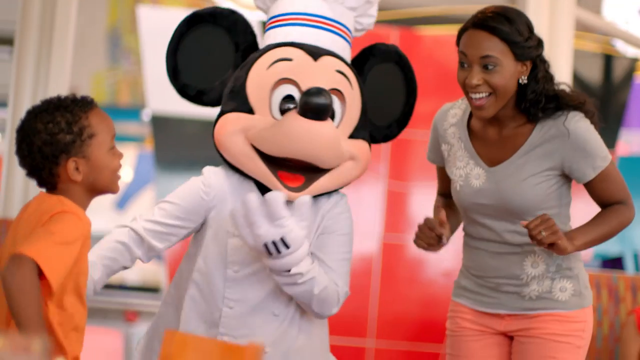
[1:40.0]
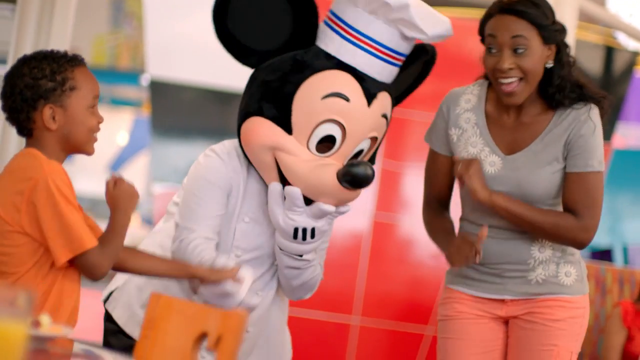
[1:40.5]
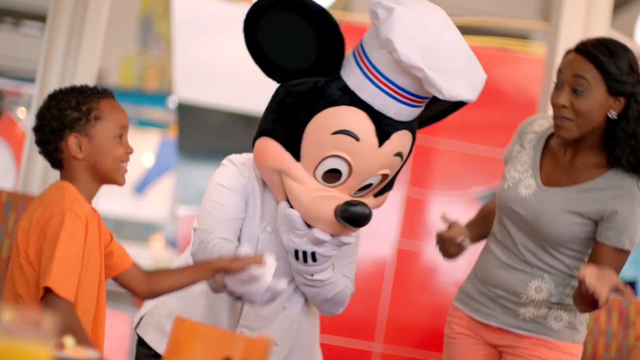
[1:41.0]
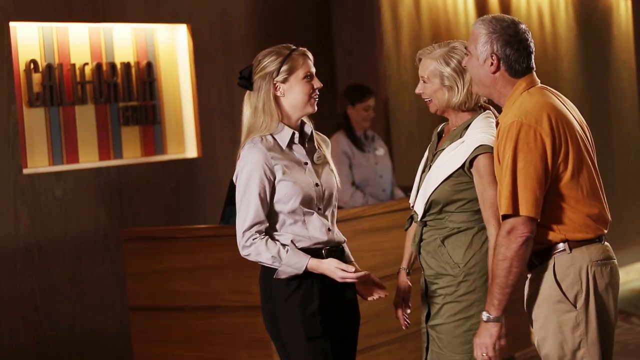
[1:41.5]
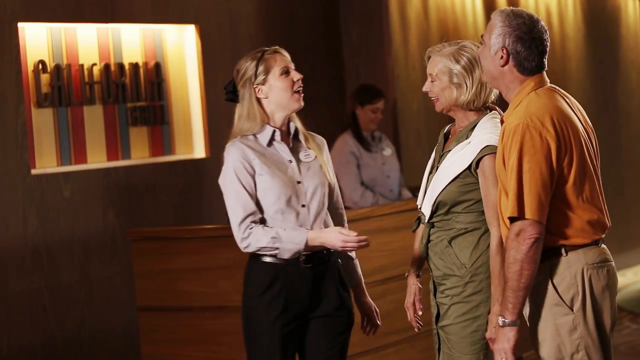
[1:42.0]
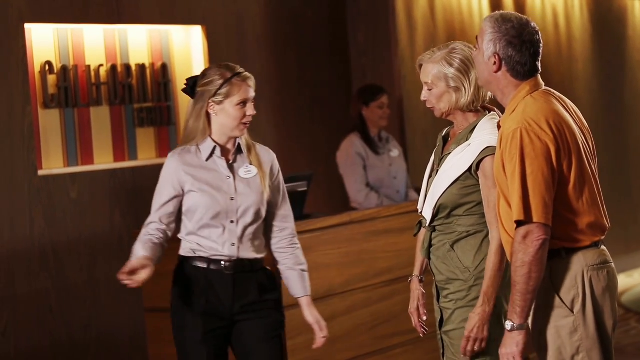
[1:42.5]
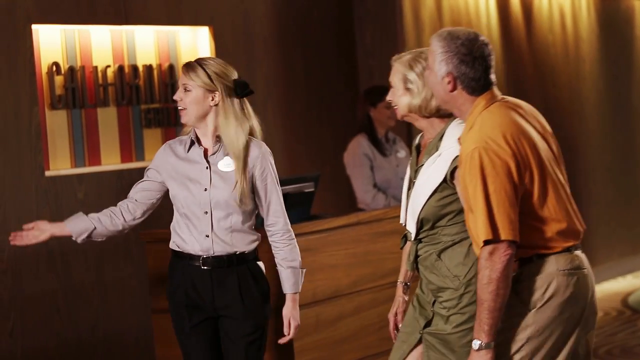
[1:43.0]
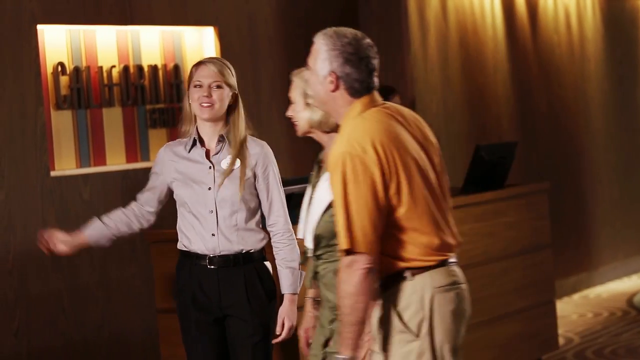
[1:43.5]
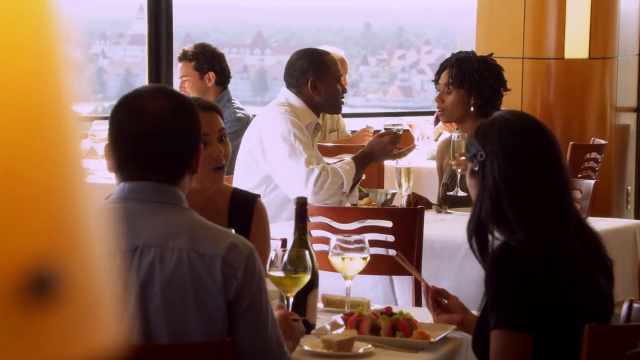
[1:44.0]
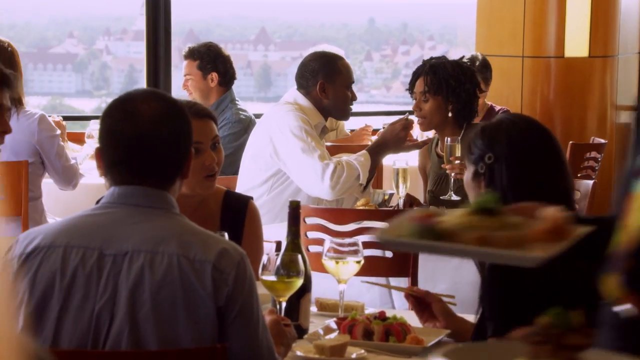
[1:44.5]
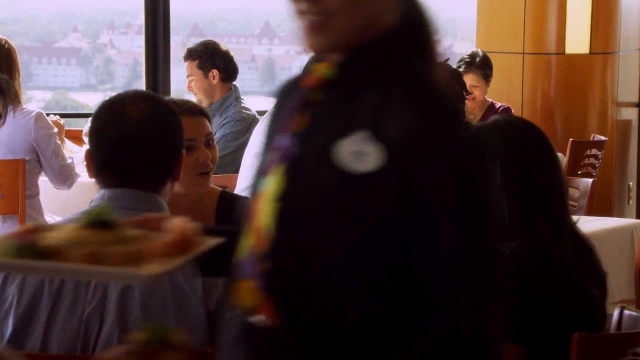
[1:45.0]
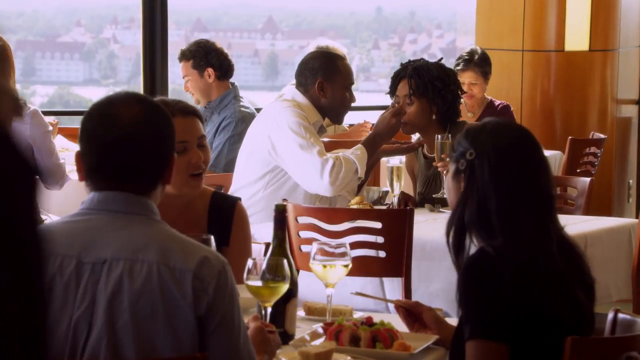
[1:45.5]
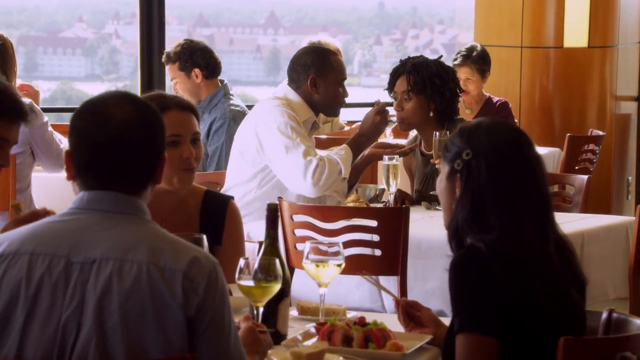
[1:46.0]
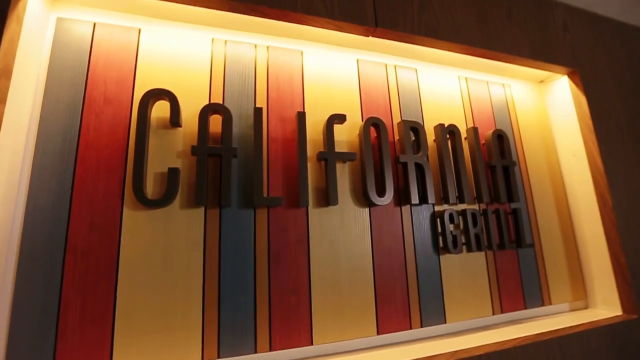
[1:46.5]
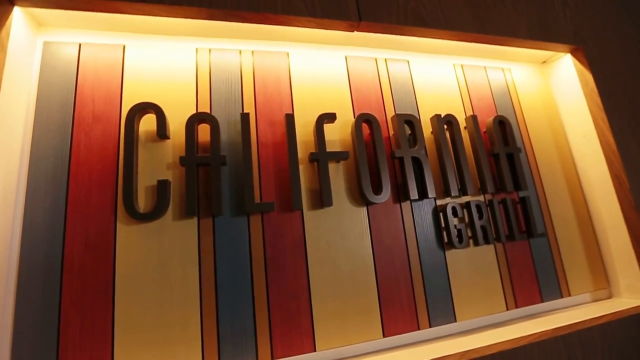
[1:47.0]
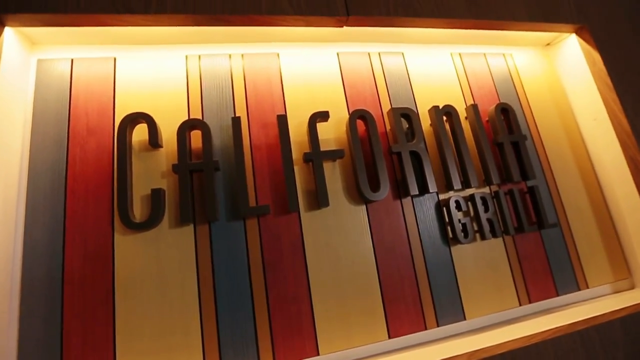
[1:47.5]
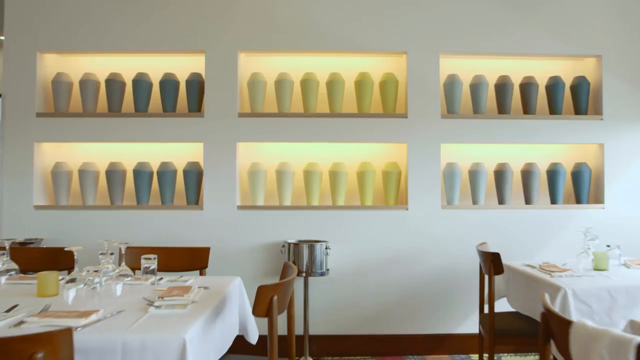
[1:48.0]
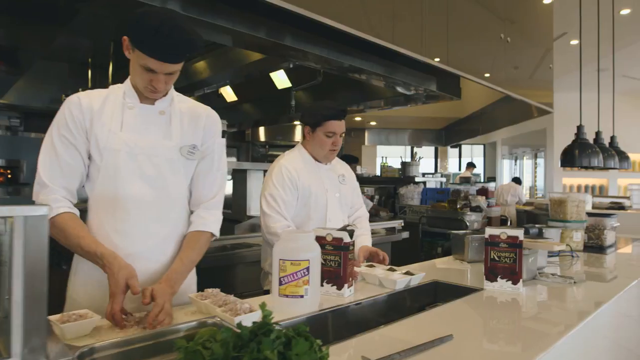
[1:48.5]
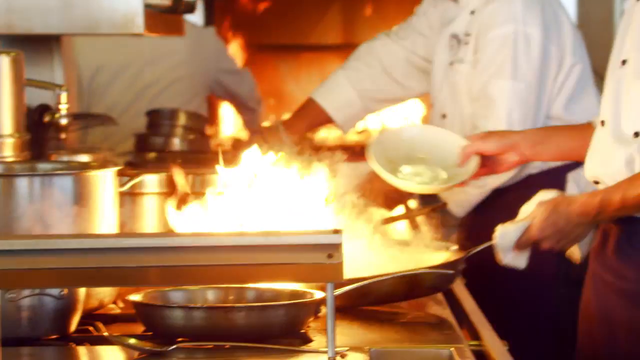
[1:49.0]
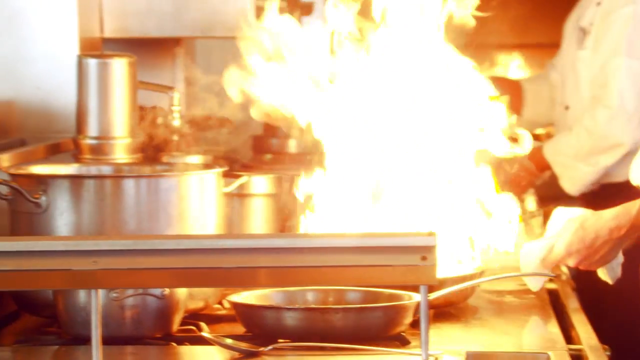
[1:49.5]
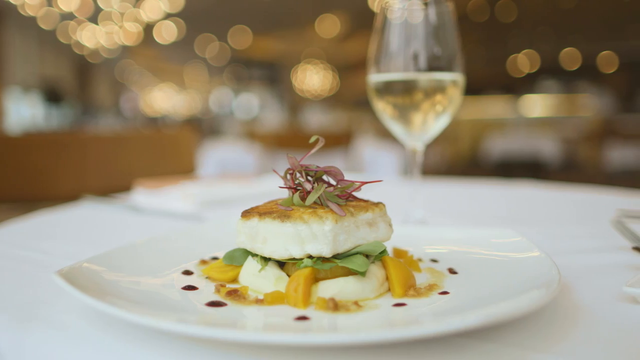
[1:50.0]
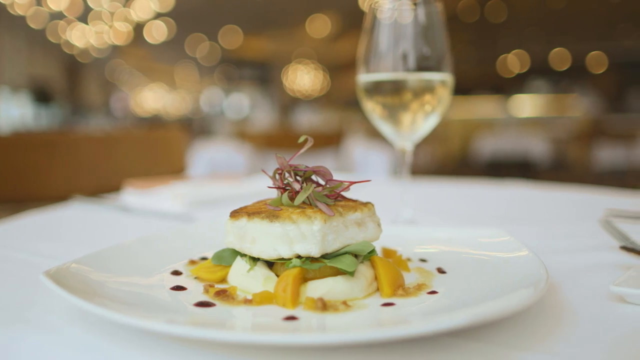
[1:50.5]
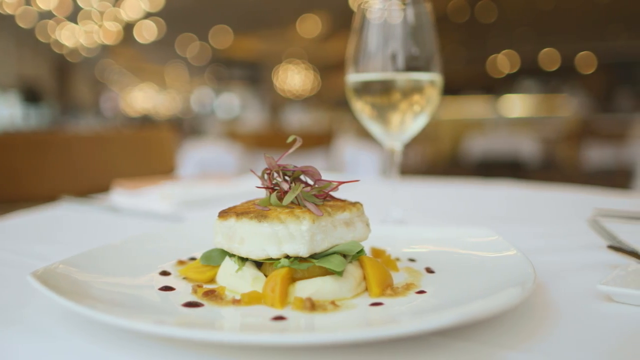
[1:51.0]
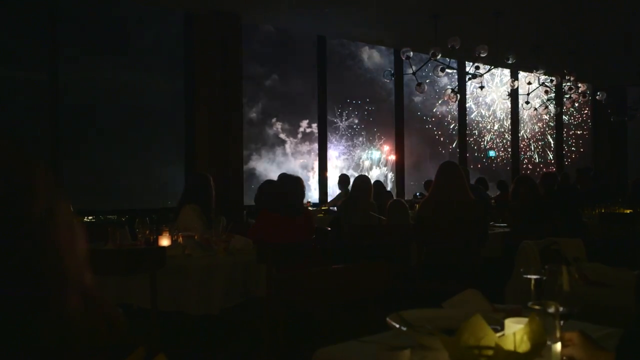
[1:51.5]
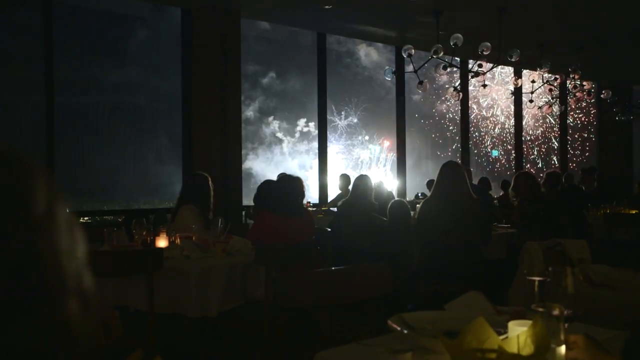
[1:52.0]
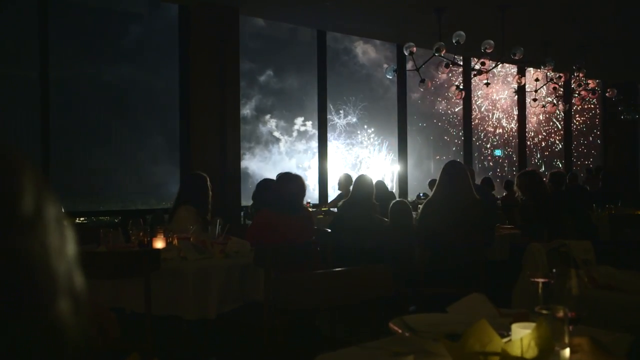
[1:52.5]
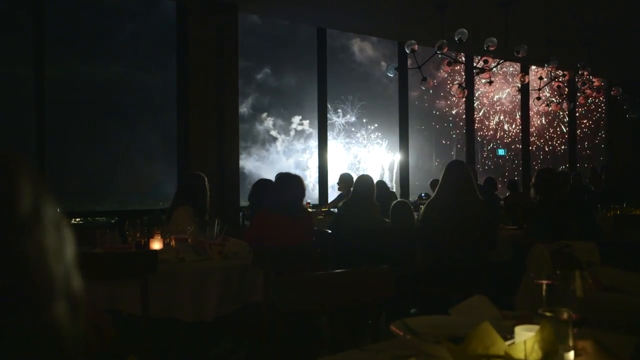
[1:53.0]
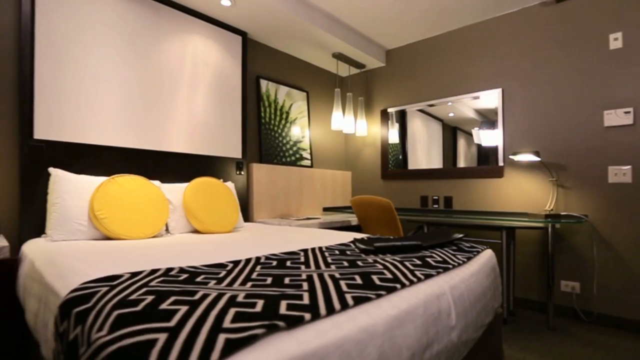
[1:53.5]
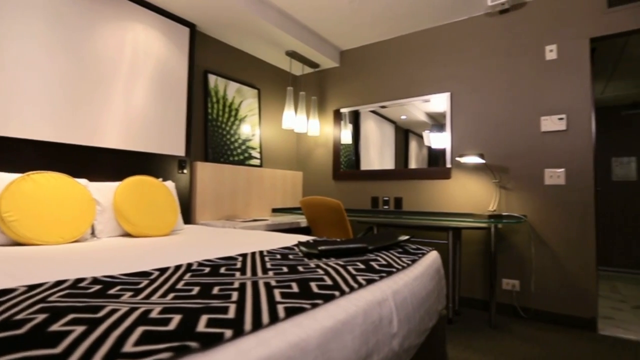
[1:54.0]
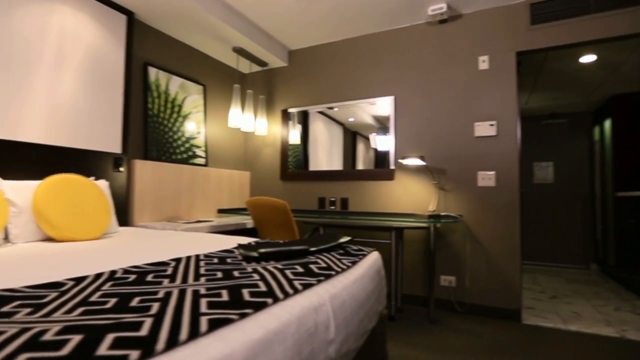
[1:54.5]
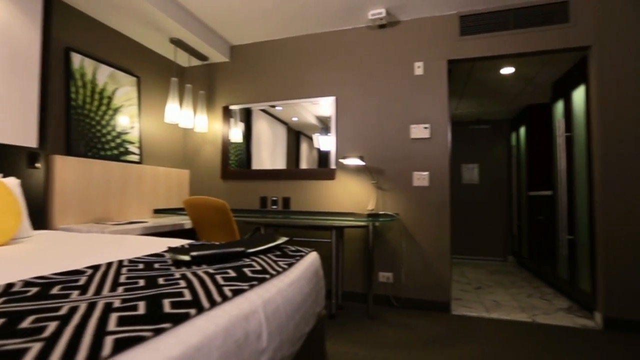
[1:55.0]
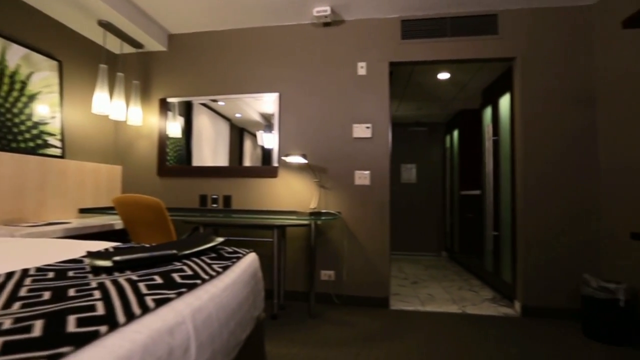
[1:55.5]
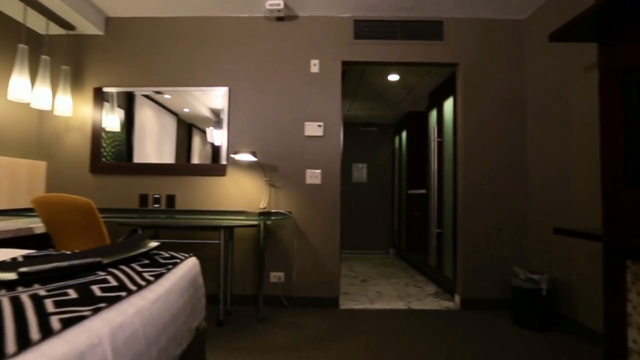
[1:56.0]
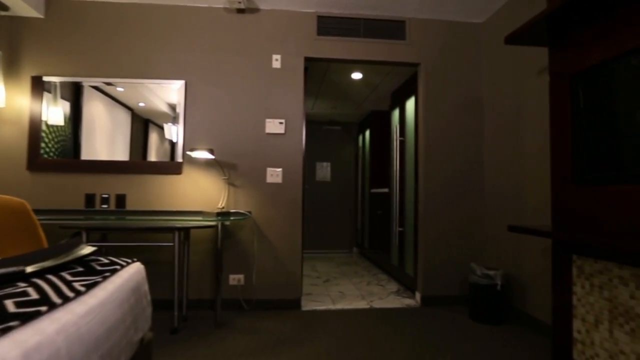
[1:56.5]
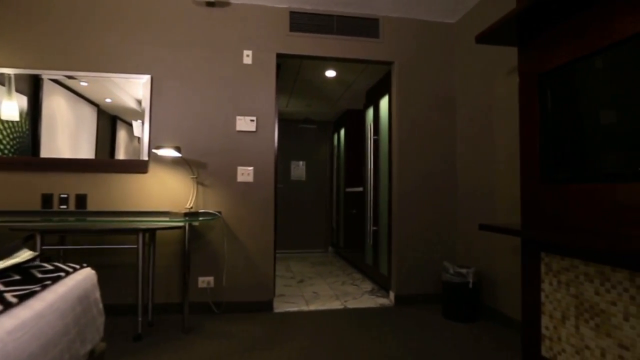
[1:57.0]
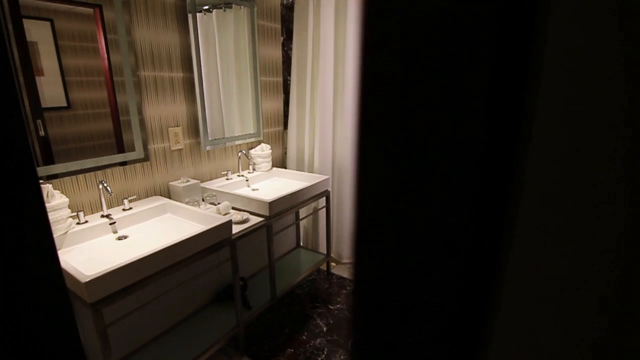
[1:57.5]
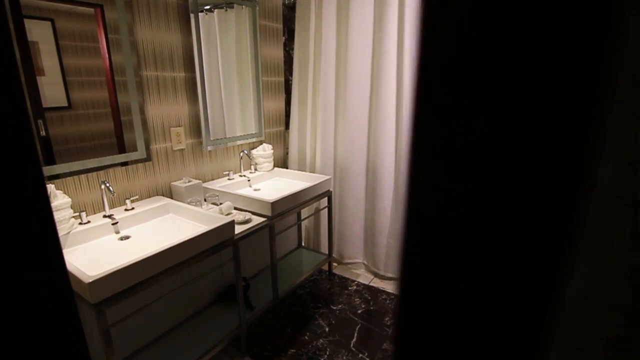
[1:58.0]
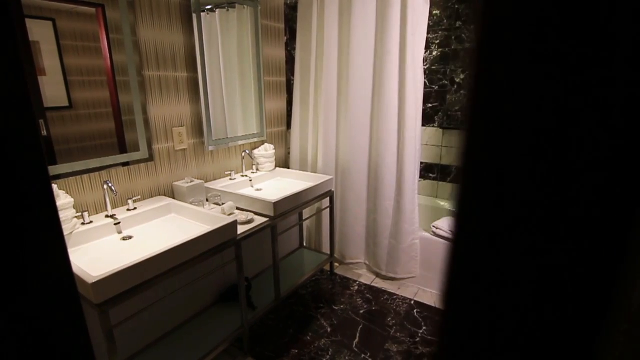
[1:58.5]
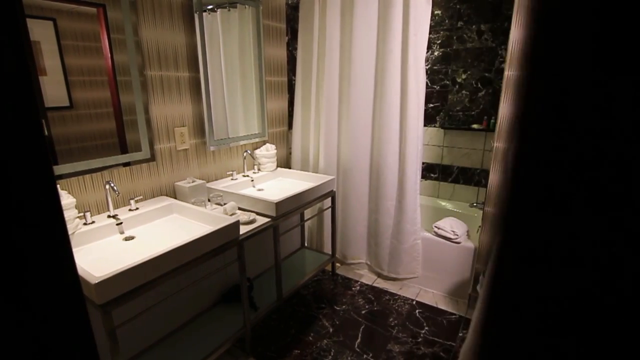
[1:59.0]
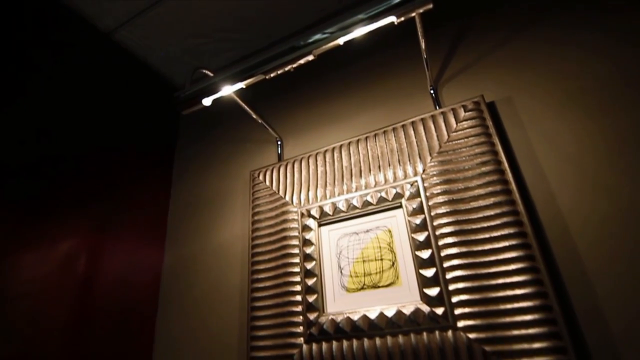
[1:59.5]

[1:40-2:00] Under the title "Disney's Contemporary Resort, Walt Disney World," a young family talks with a Mickey character dressed as a chef; the young mother and her young son laugh with Mickey outside a restaurant. Outside the restaurant called California Grill, the maitre d' speaks to an older couple before showing them to their table. Many diners sit at their tables eating. The California Grill sign appears, along with shots of chefs cooking, diners enjoying their food, and line cooks working with fire to create the dishes. A plated white fish and a glass of white wine sit on a table with a white tablecloth. Toward the end, the restaurant's dining room is shown with all the lights off, and fireworks from the park are visible outside the window. The video ends with an interior shot of a resort room, spanning across the guest bed, the desk, the hallway and the bathroom.